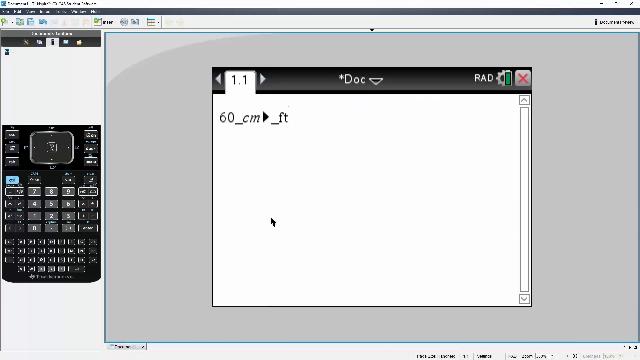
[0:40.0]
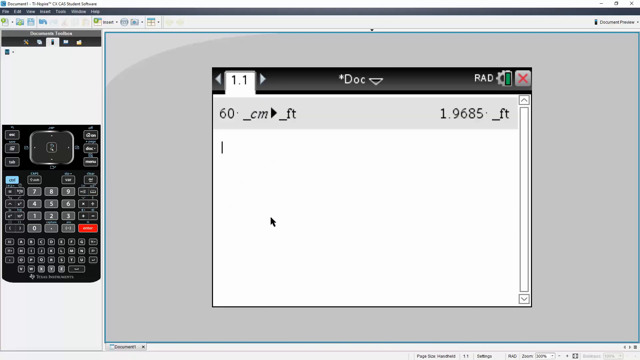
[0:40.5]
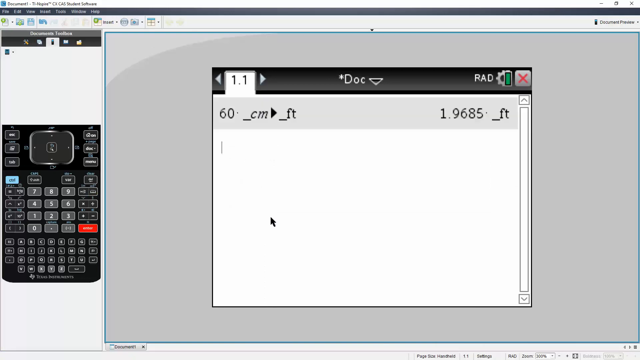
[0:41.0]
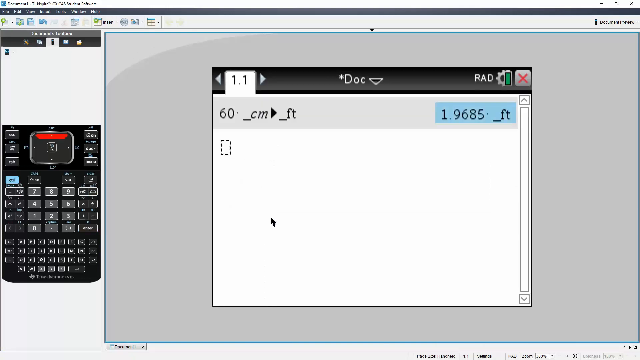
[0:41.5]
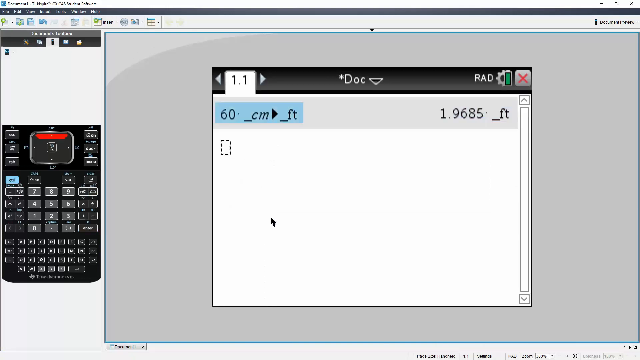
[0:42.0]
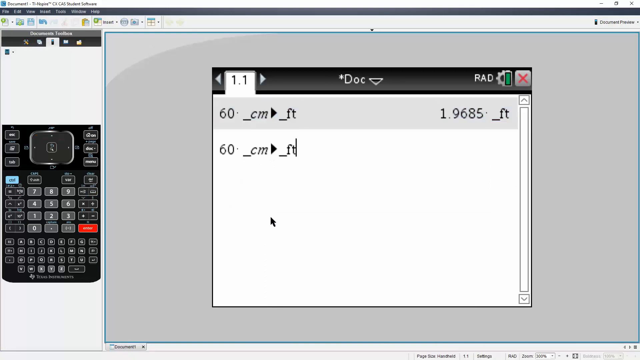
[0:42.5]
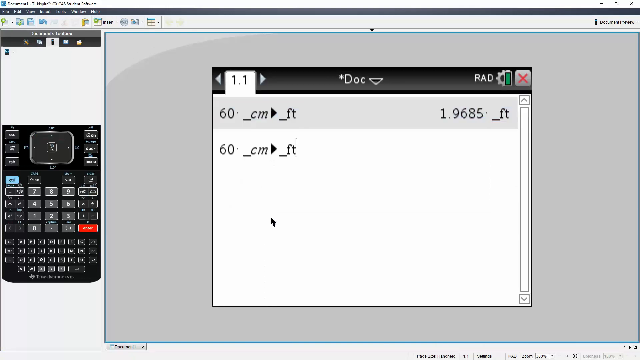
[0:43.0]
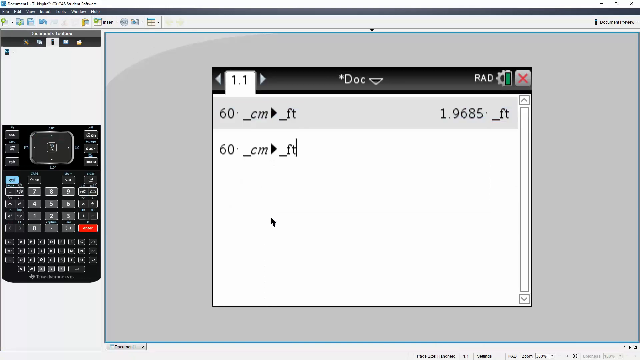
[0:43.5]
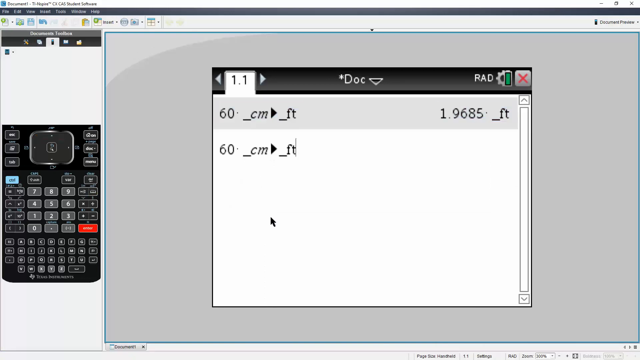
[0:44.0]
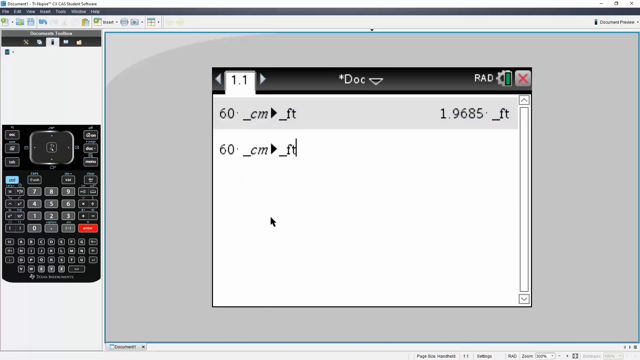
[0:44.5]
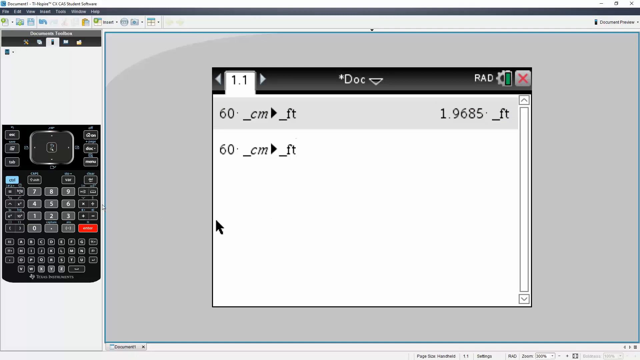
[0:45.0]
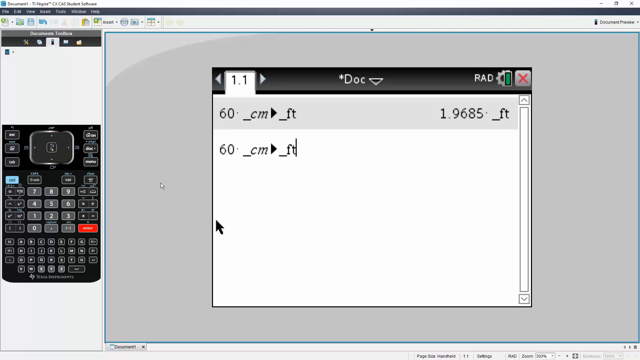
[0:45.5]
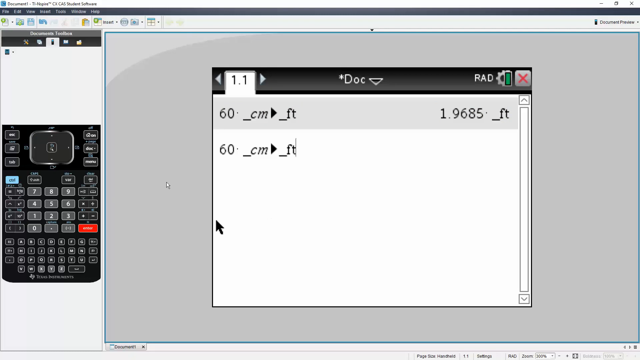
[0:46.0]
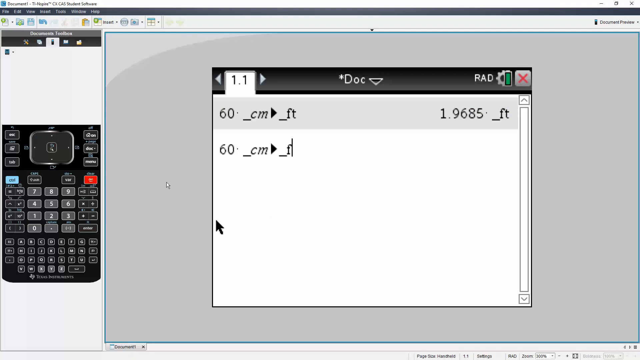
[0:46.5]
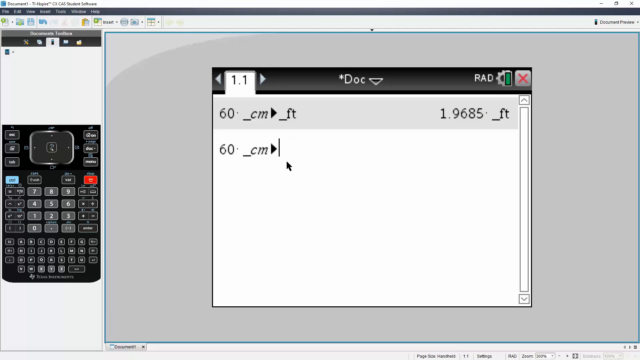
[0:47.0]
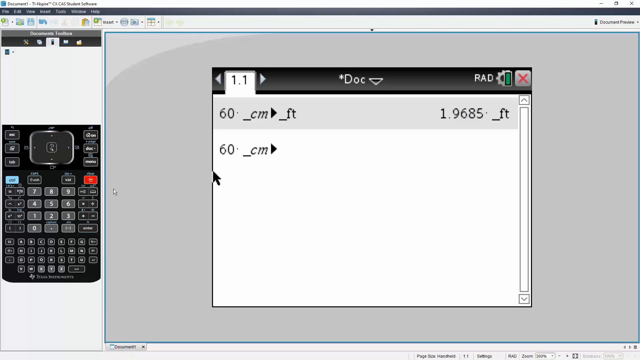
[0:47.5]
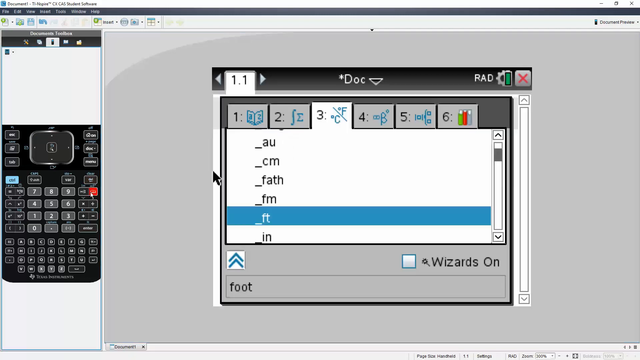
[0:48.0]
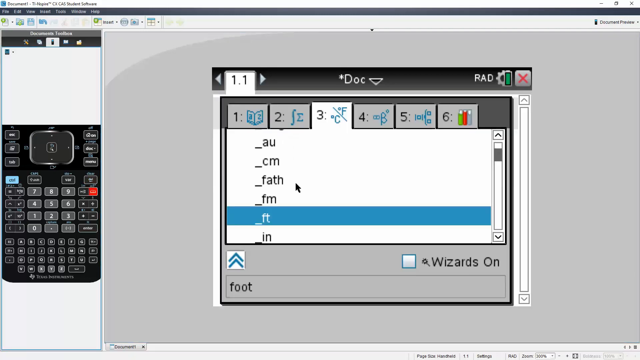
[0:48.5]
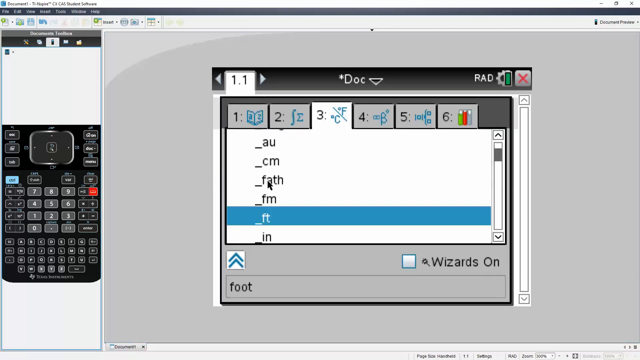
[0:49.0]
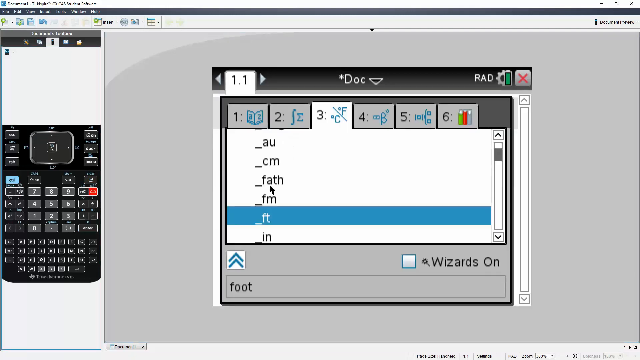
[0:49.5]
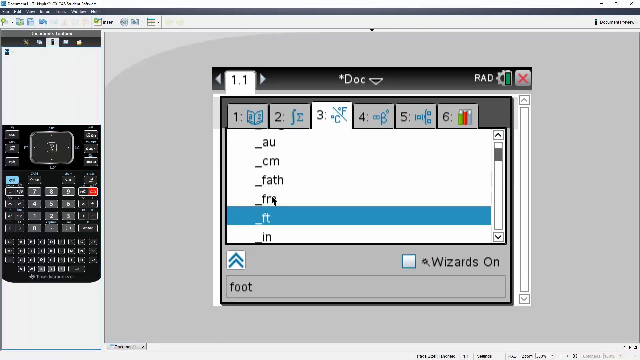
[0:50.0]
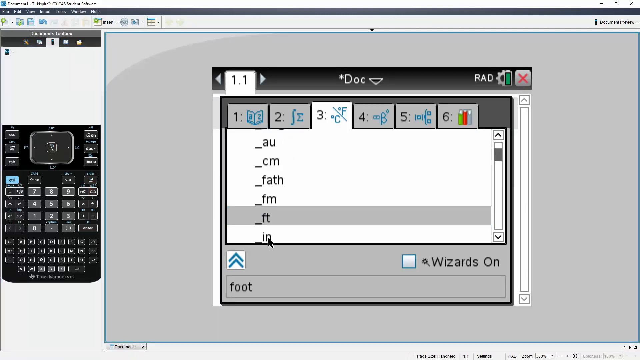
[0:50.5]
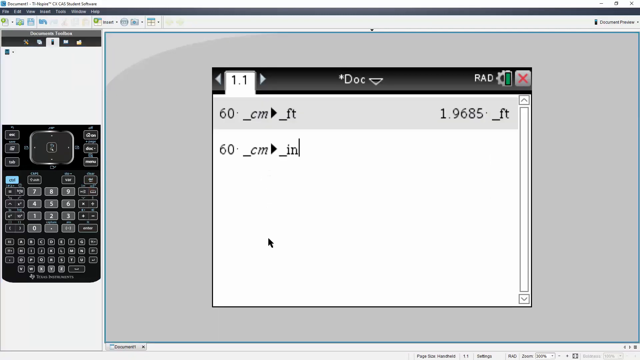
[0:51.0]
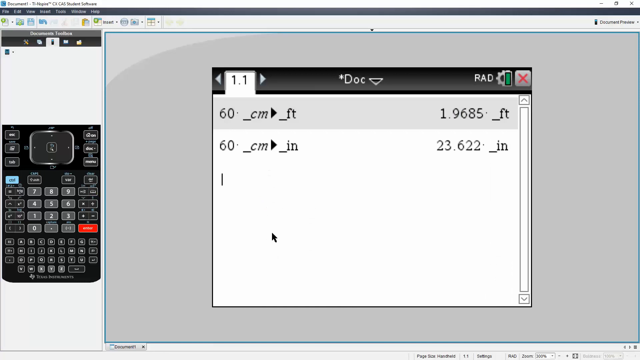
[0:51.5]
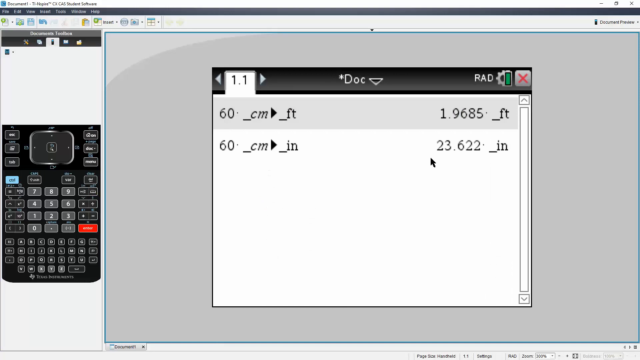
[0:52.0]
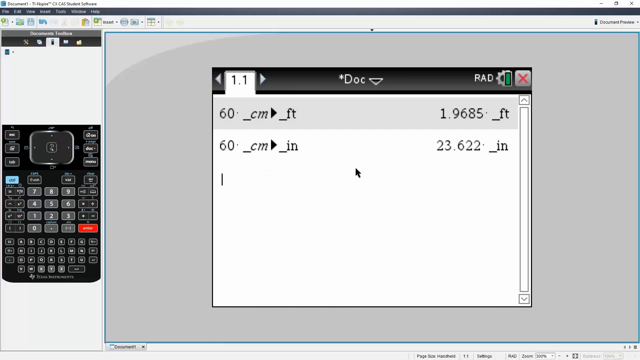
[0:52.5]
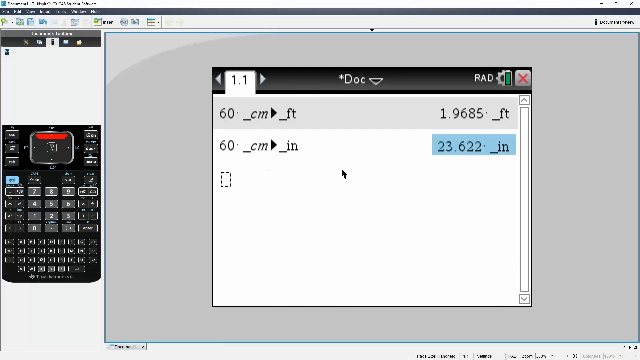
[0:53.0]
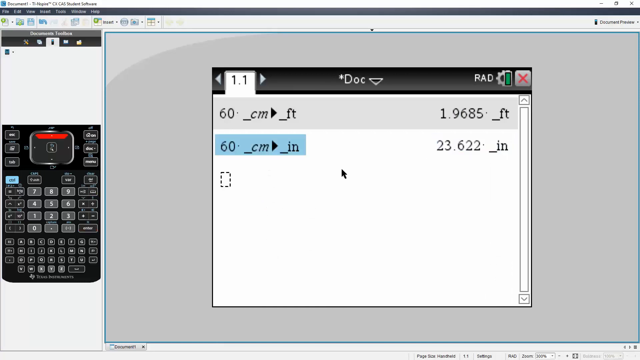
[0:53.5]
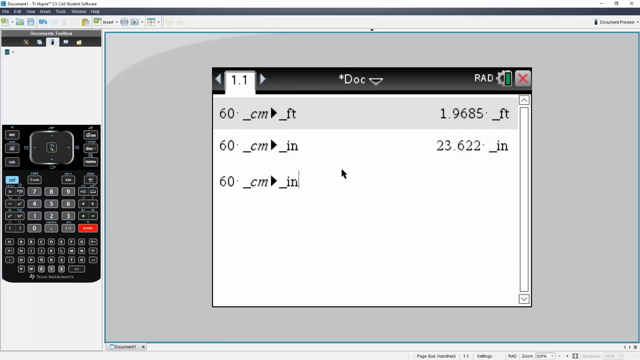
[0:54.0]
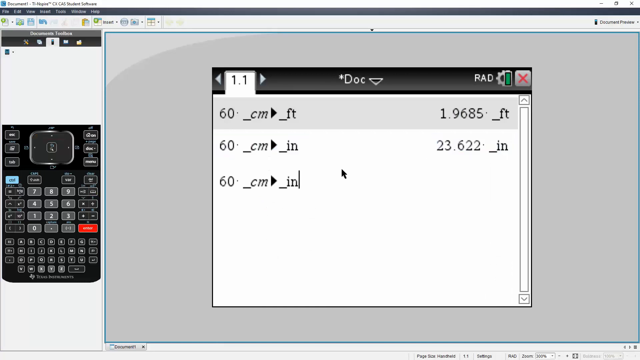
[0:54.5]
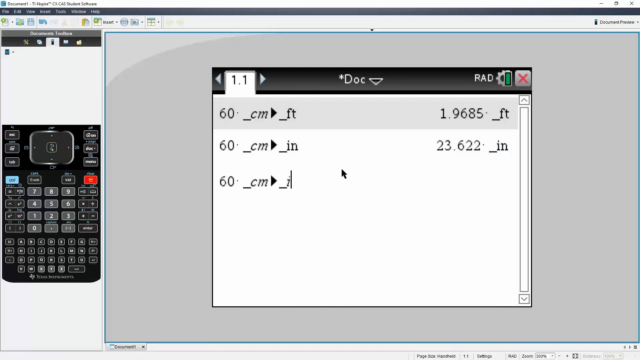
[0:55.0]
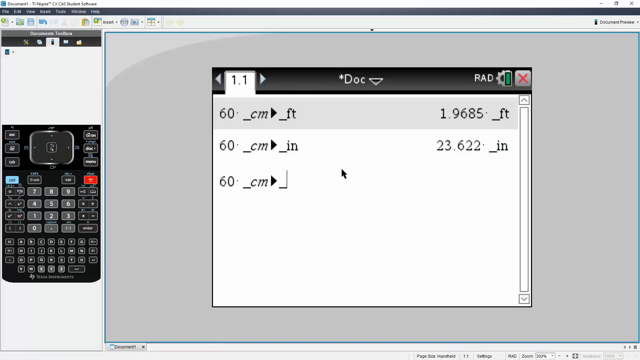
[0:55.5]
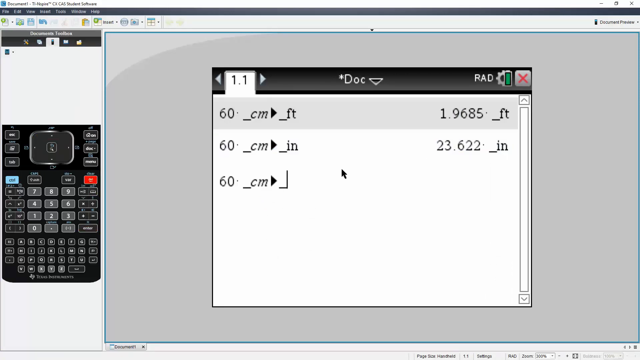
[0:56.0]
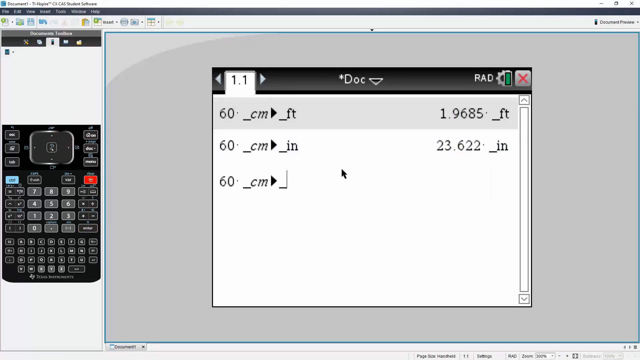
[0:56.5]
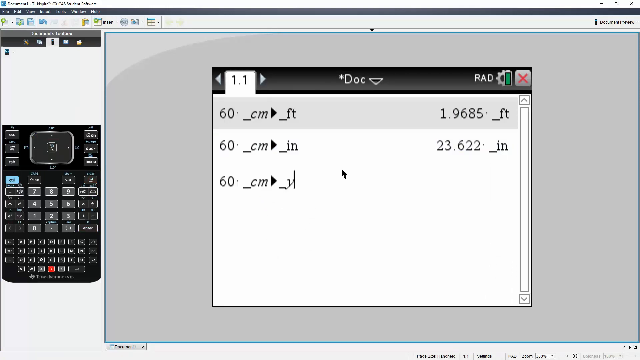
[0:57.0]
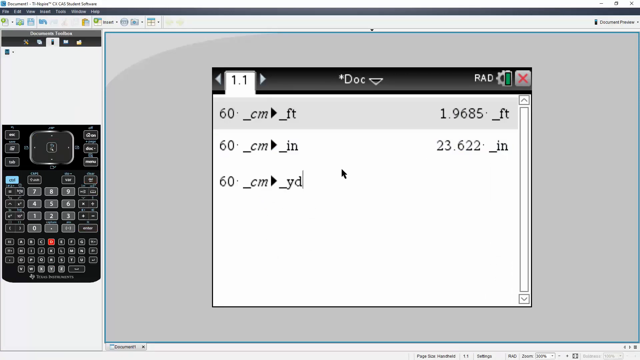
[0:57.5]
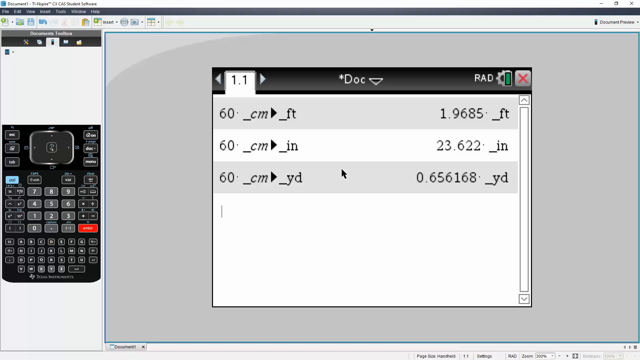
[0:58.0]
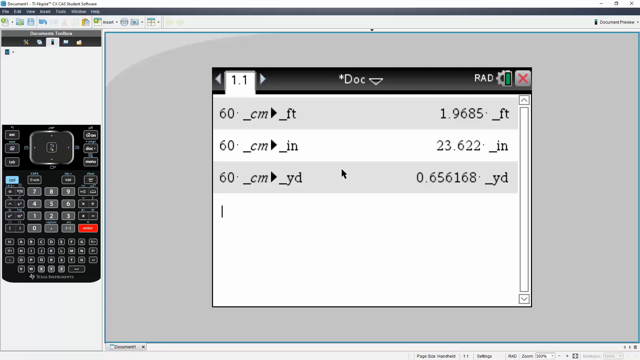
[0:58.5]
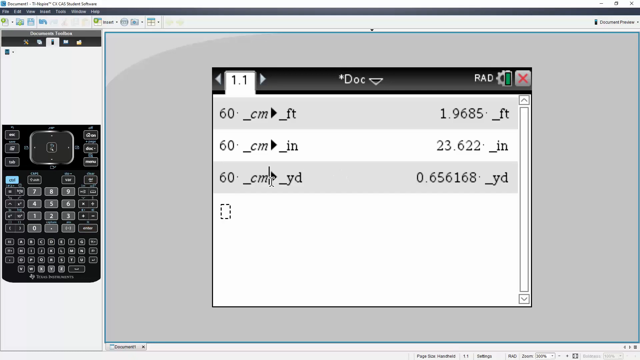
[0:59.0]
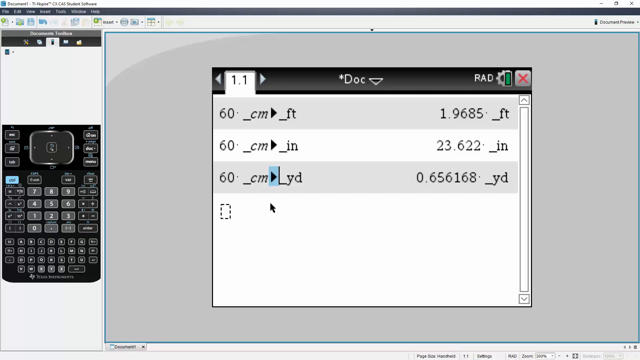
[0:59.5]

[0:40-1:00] Another button on the calculator is clicked, and on the right side it says "1.9685 feet". A blue highlight is around the 60 centimeters to feet on the left side. That line is copied and pasted below it. Another button on the calculator is clicked, then feet is deleted and changed to inches. After the equals button on the calculator is clicked, the right side says "23.622 inches". The 60 centimeters to inches line is highlighted and brought down below it, with the cursor next to inches. As another button is pressed on the calculator, showing red, the "IN" is erased and "YD" is typed in. The right side now says "0.656168 yards". All three conversions of 60 centimeters, to feet, inches and yards, are now shown underneath the dock.